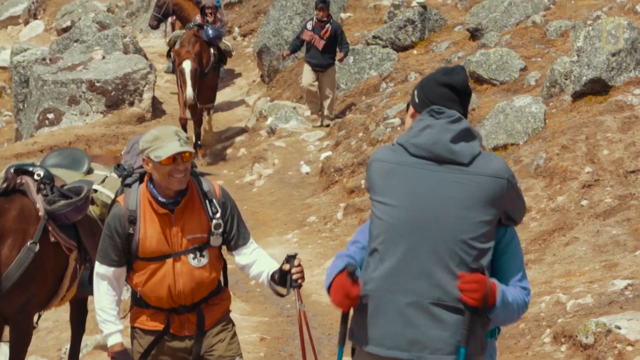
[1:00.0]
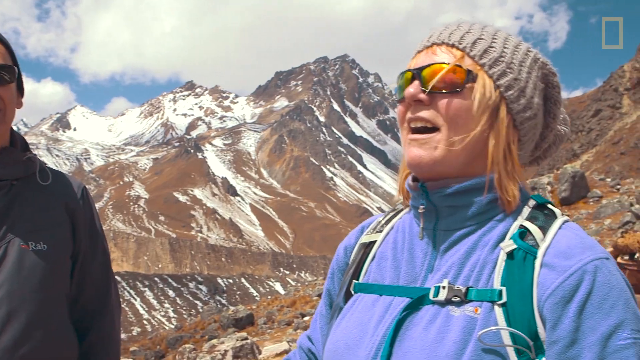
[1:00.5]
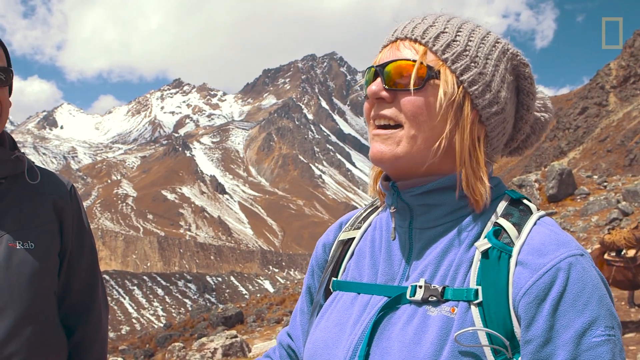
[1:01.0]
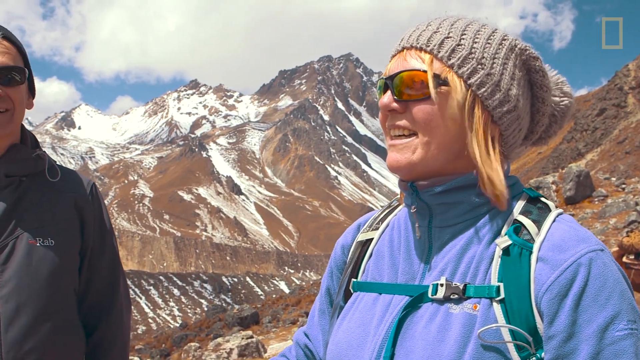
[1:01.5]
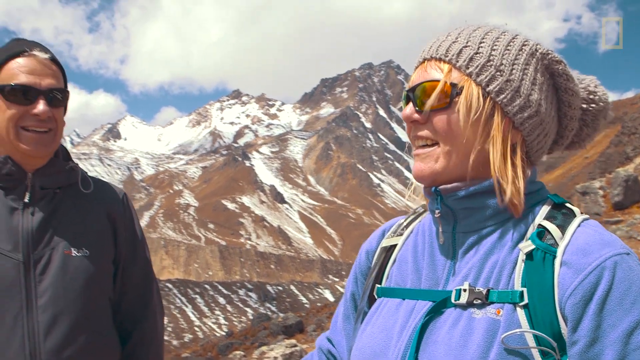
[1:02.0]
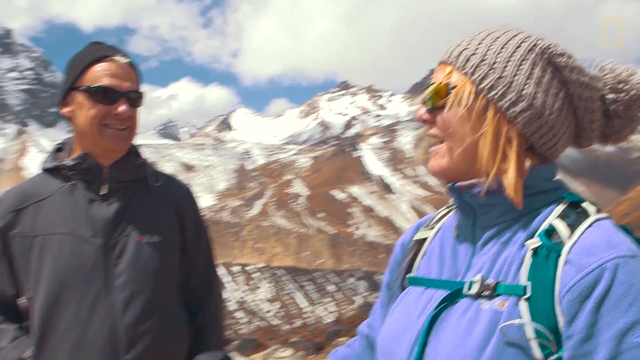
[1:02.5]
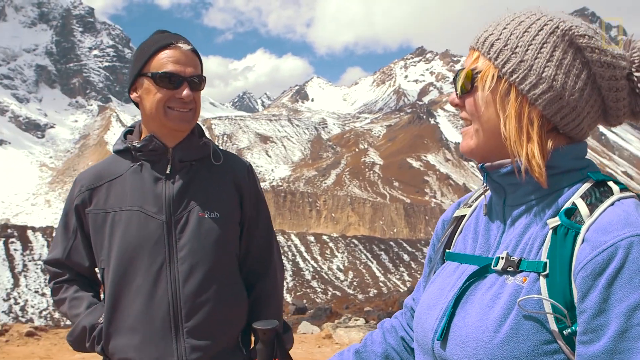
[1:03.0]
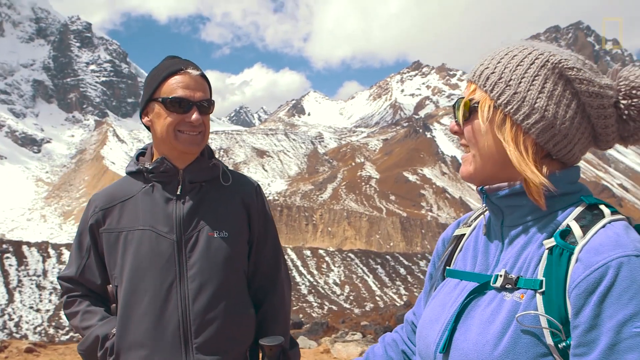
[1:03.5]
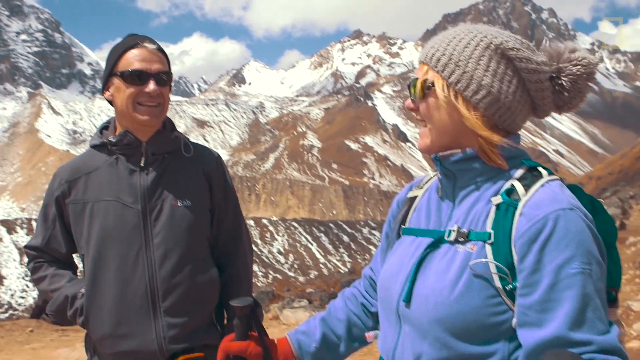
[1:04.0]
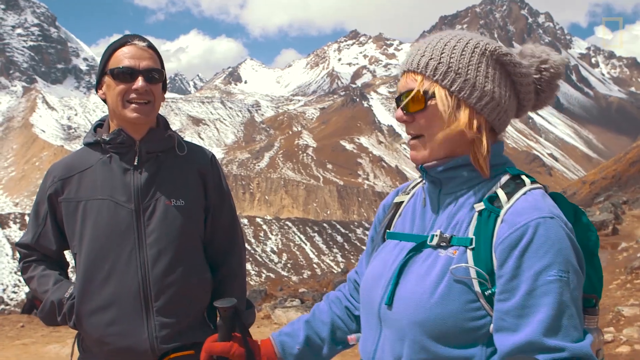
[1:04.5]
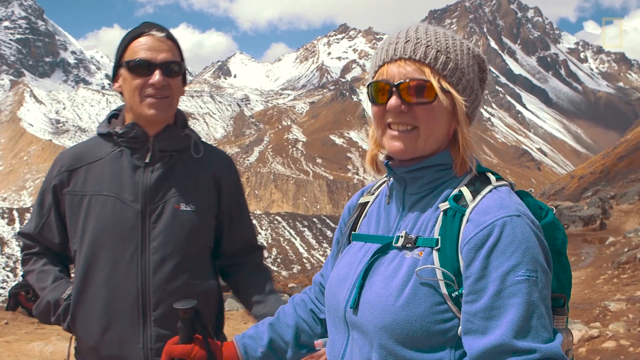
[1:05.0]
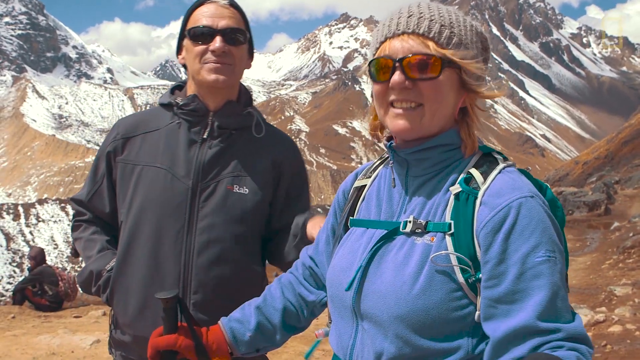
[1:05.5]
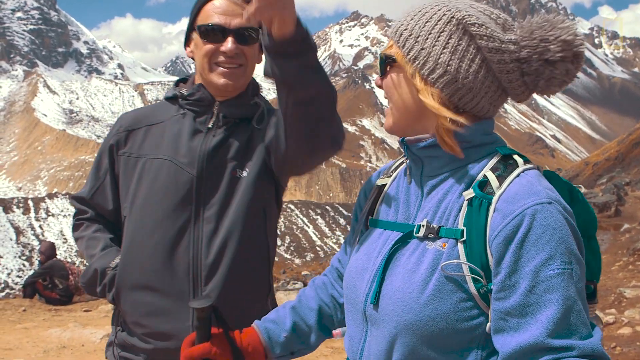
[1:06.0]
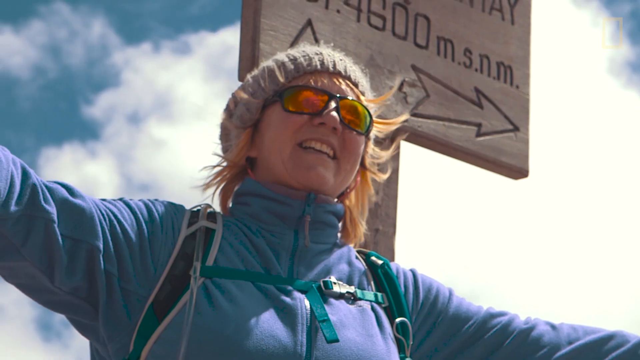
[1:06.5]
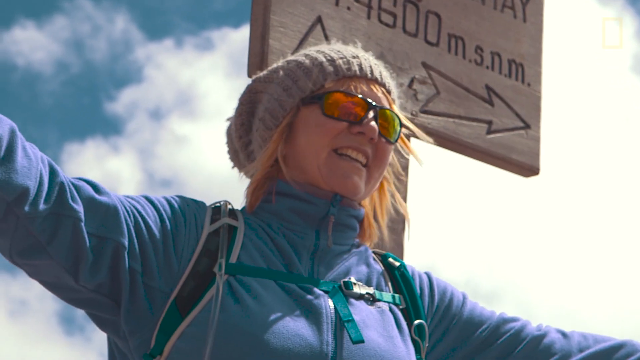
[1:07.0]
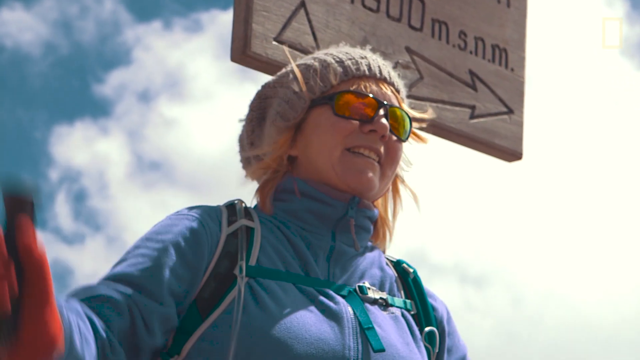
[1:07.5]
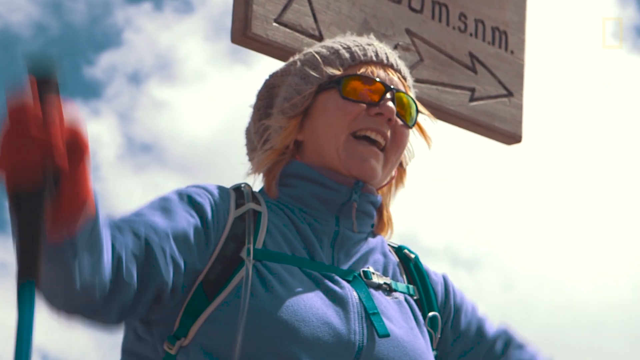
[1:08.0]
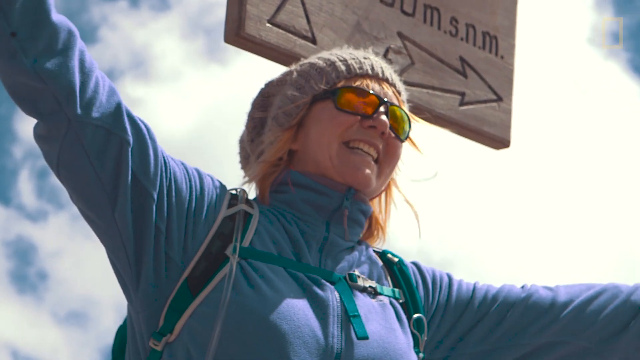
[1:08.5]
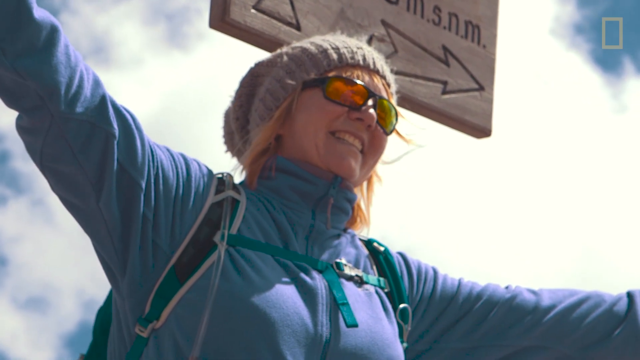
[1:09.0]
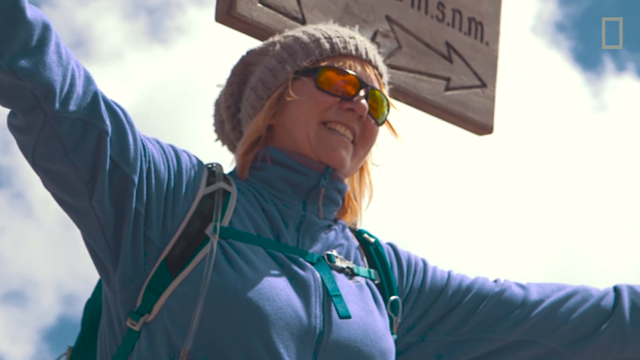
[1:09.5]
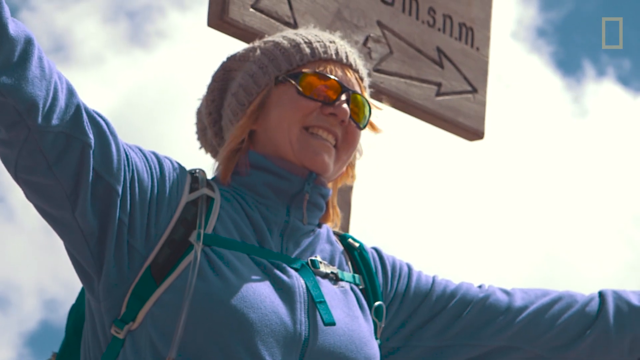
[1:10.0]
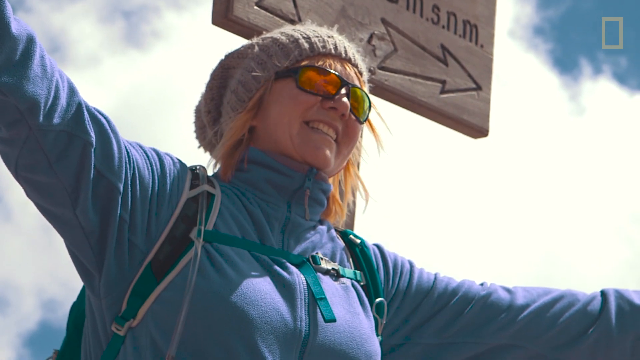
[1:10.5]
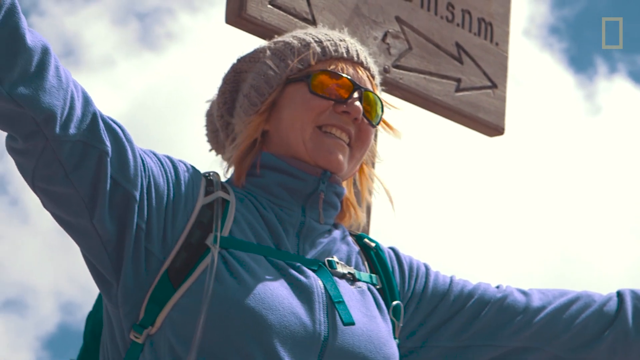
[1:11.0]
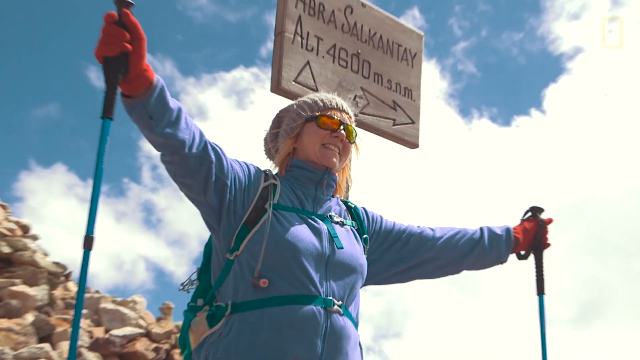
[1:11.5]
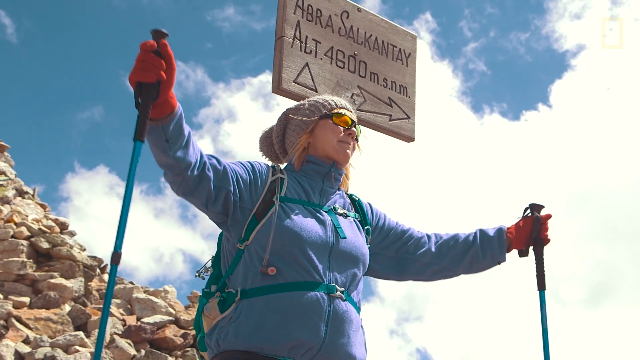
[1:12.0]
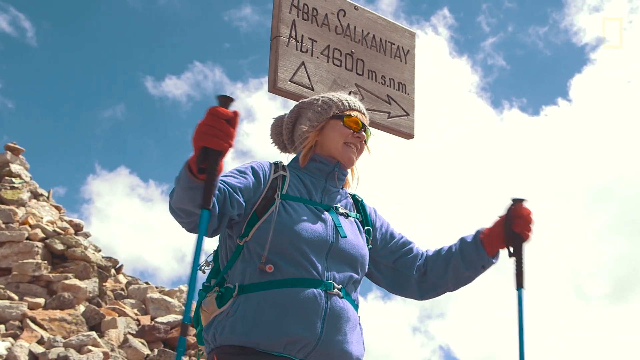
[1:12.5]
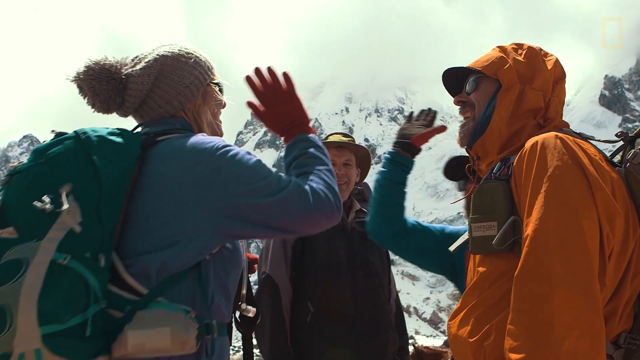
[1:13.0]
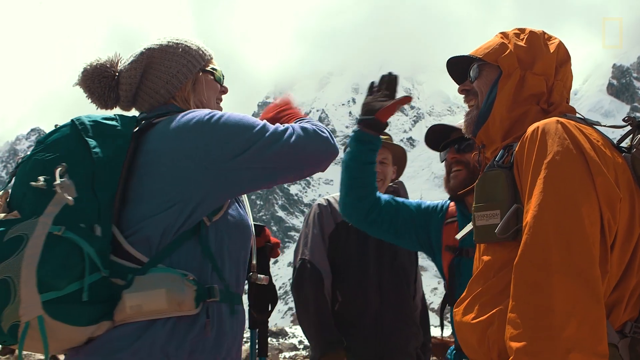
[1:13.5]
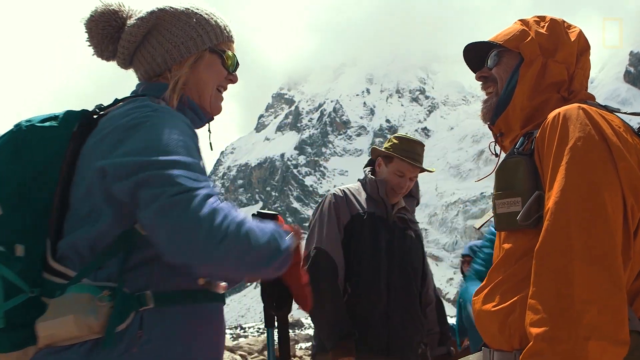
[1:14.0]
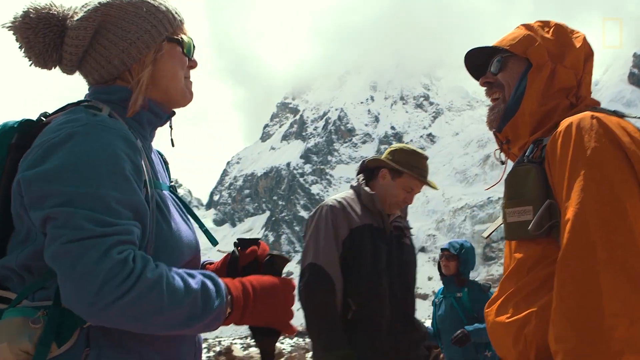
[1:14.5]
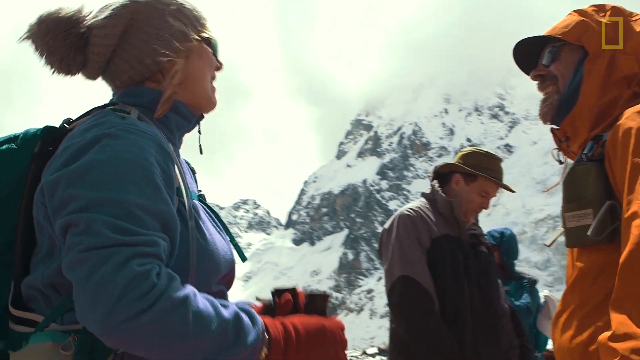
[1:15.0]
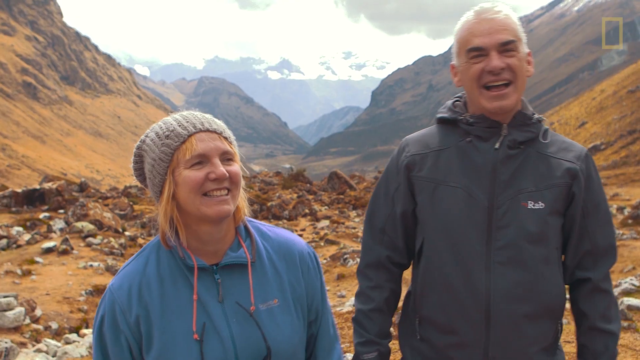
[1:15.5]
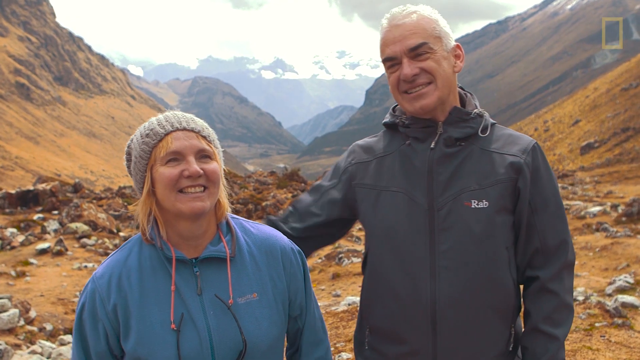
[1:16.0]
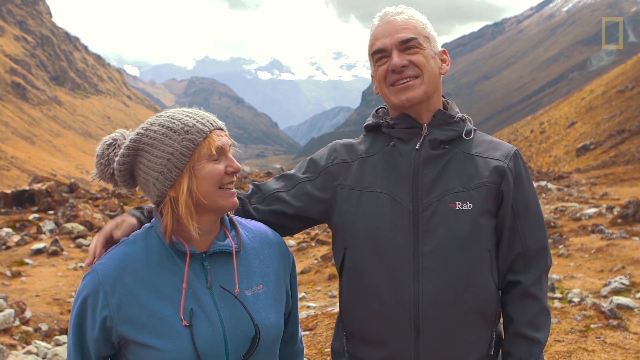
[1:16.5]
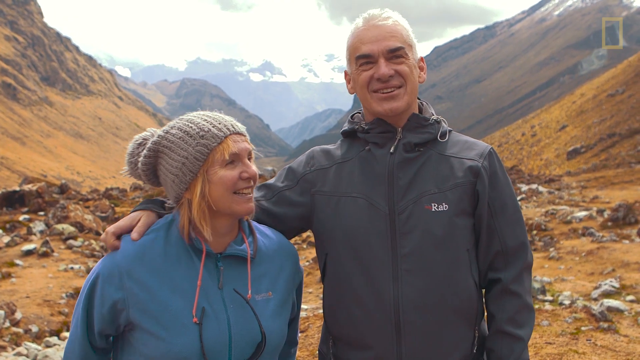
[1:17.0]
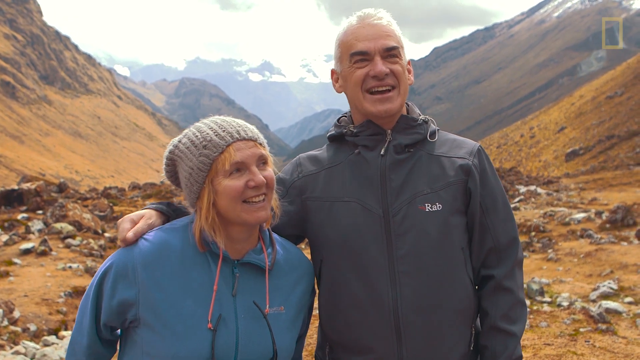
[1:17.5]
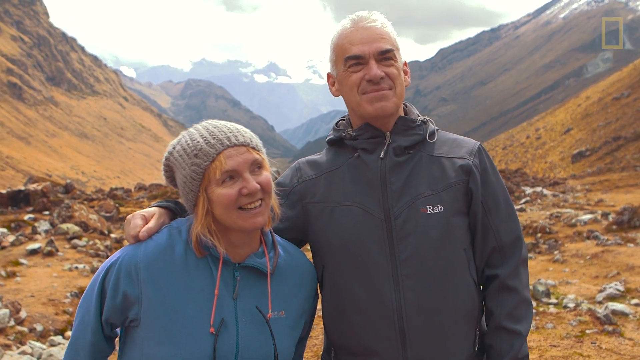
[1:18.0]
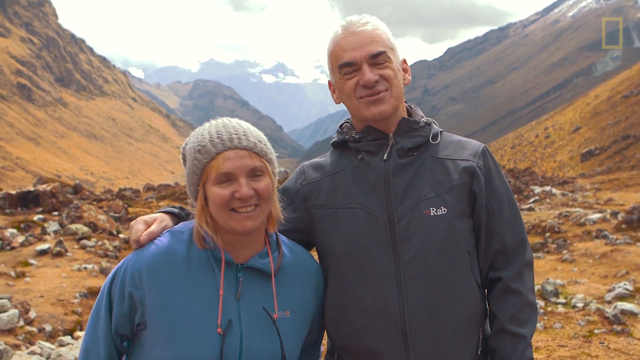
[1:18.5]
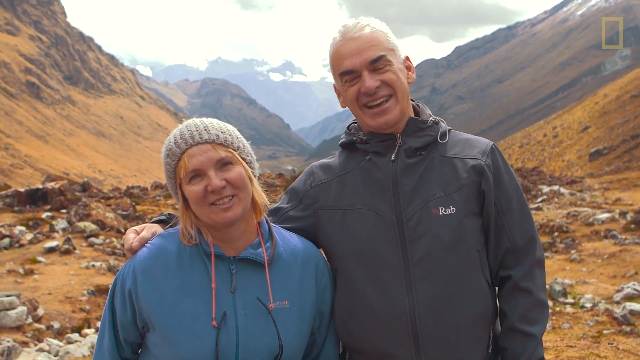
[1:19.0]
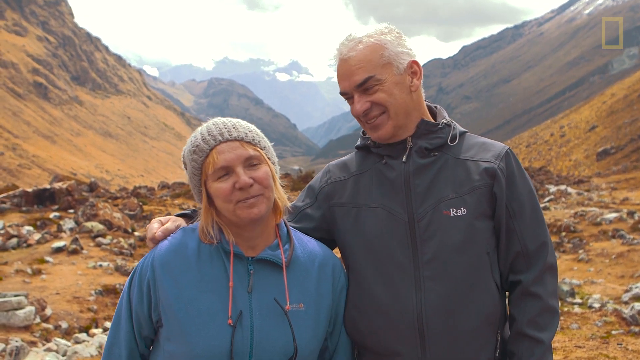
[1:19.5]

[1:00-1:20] A younger couple, both dressed in ski jackets, stocking hats, gloves and sunglasses and carrying trekking poles, take pictures below a sign marking the summit. There is quite a bit of snow on the hills around, with bare ground where they walk, clouds and blue sky above, and a group of people up there. They give each other high-fives, talk to each other, take pictures and admire the view, their hair blowing in the wind from below their caps. They hug each other. In the background more horses and more people come up the trail. The couple look around and point out sights to each other.